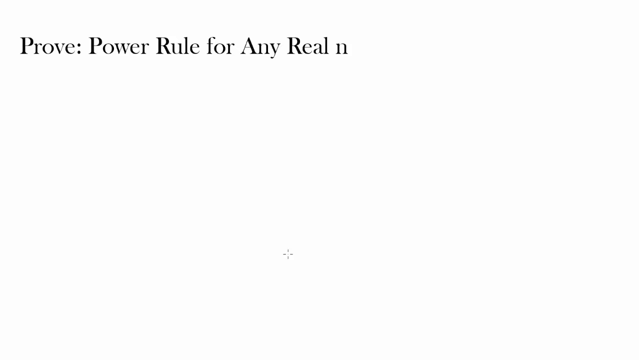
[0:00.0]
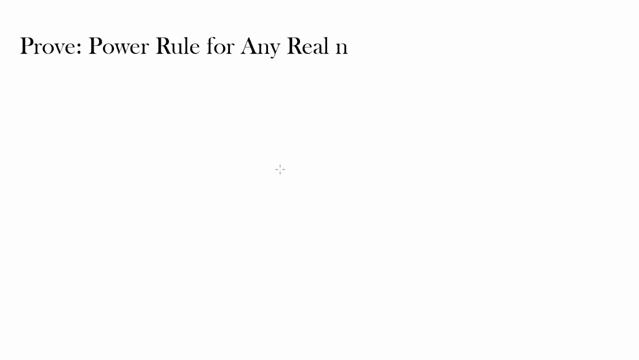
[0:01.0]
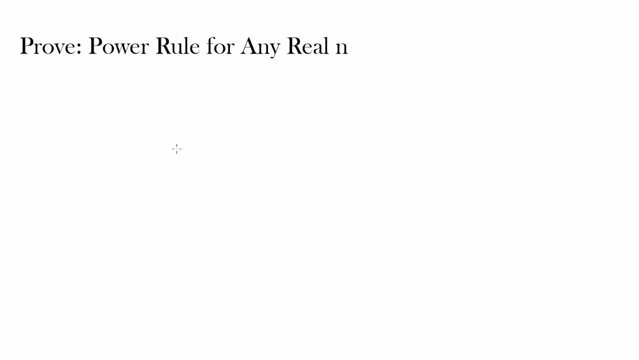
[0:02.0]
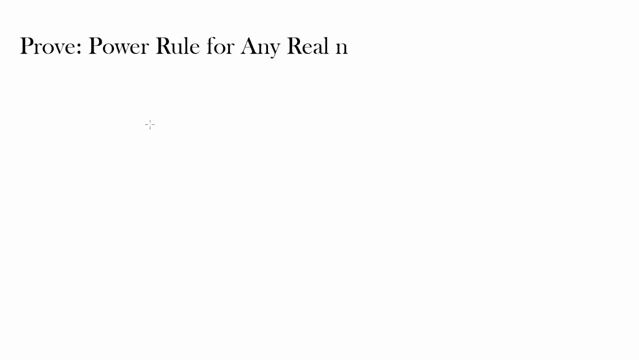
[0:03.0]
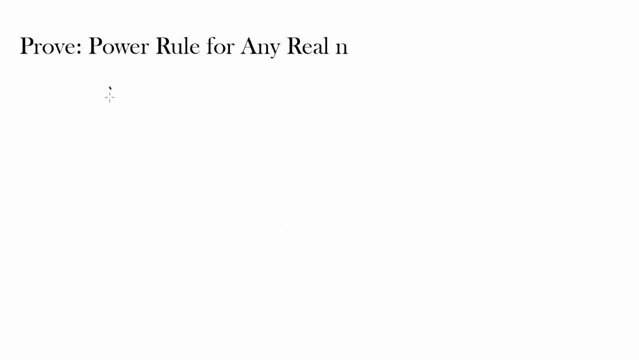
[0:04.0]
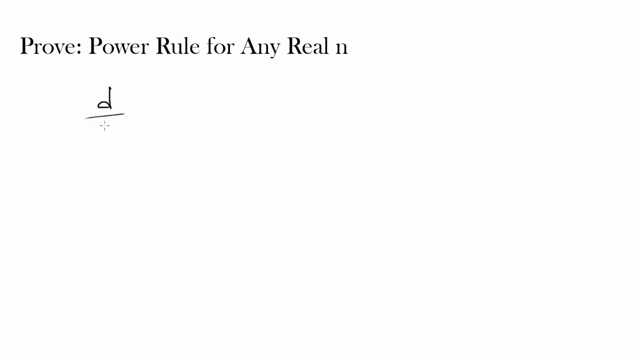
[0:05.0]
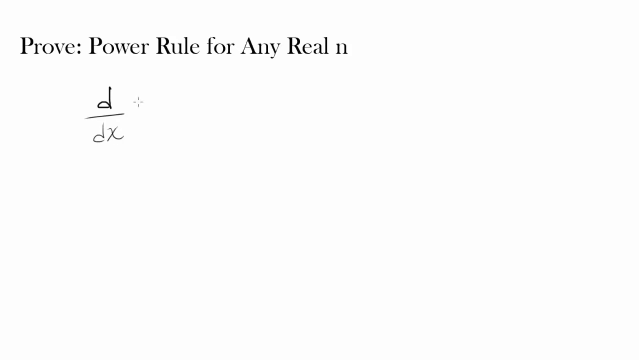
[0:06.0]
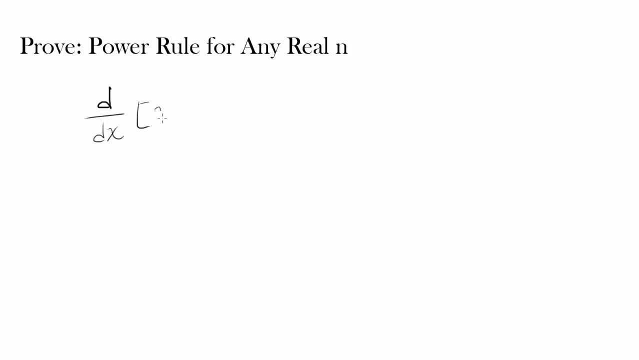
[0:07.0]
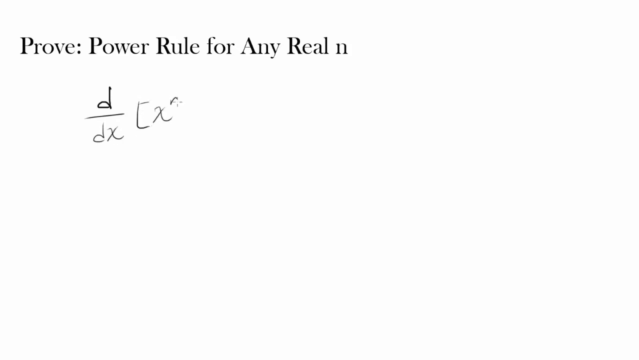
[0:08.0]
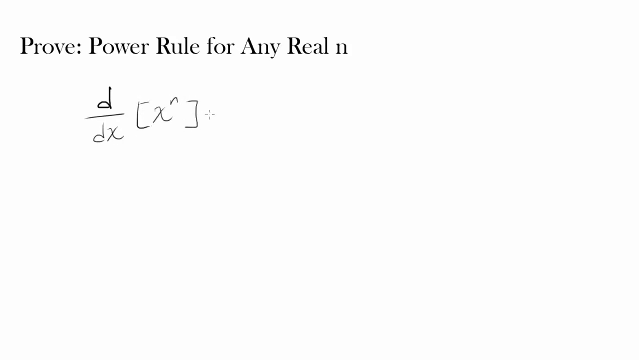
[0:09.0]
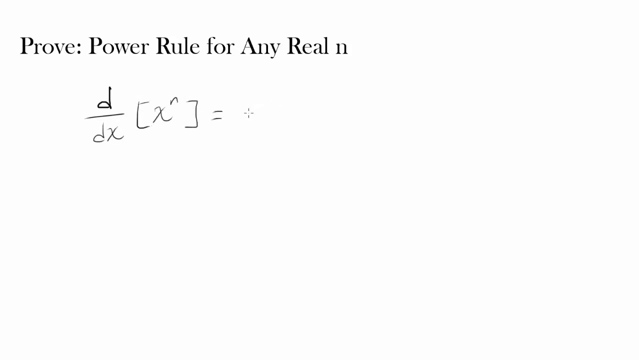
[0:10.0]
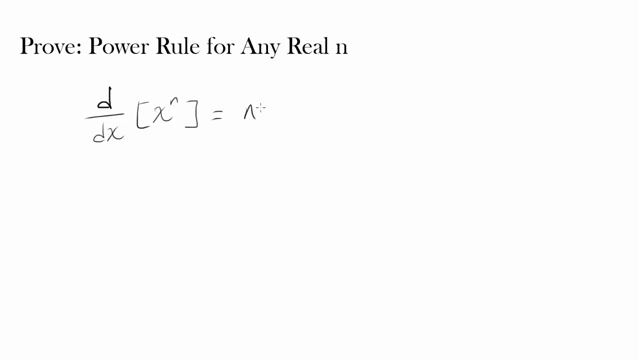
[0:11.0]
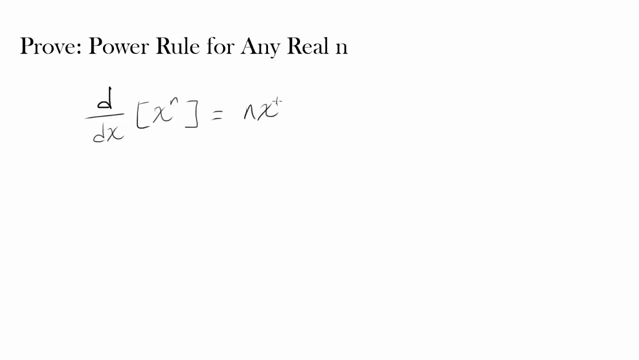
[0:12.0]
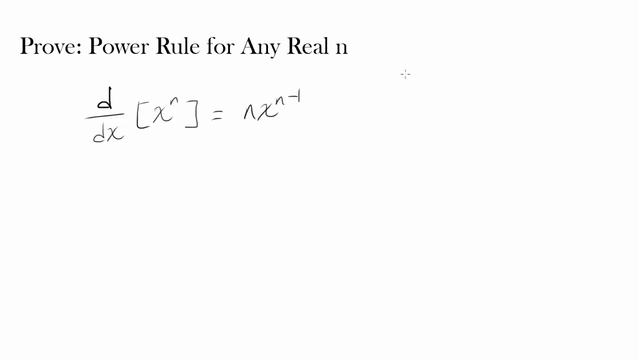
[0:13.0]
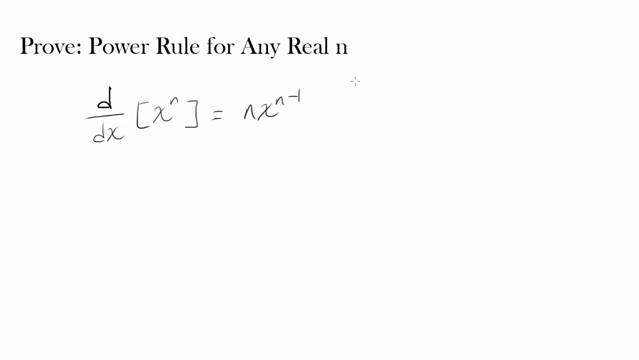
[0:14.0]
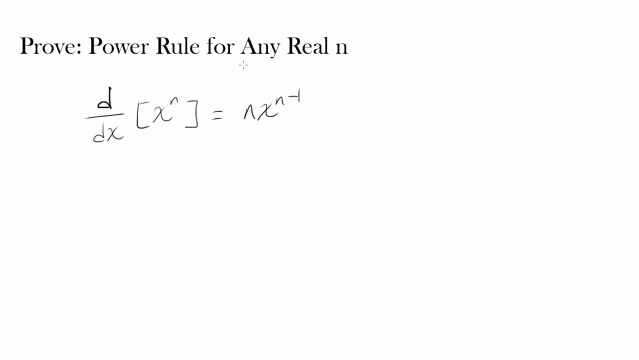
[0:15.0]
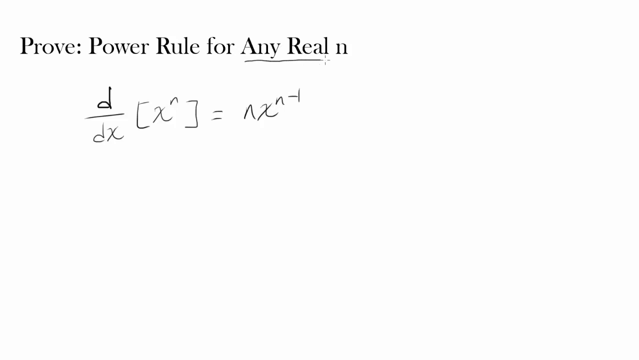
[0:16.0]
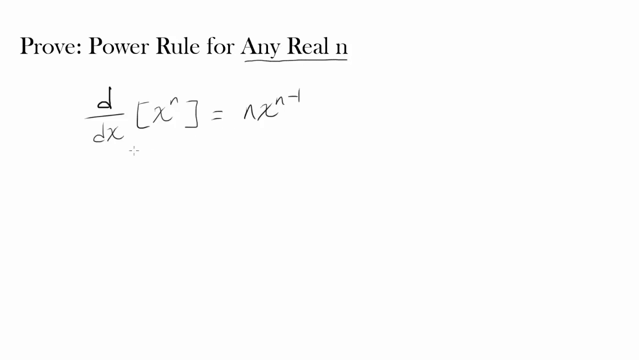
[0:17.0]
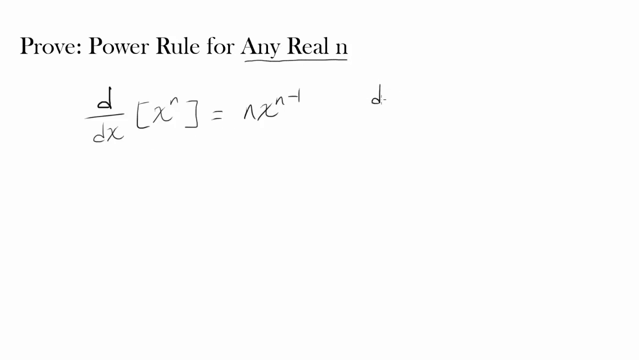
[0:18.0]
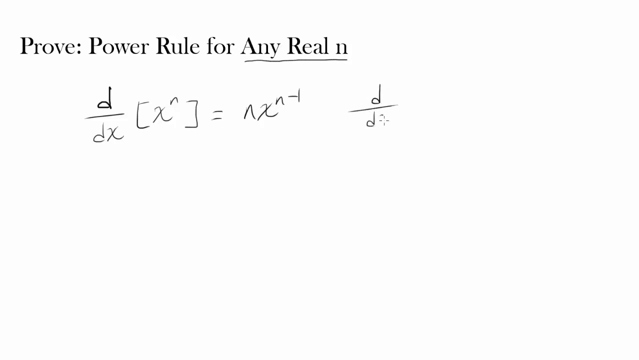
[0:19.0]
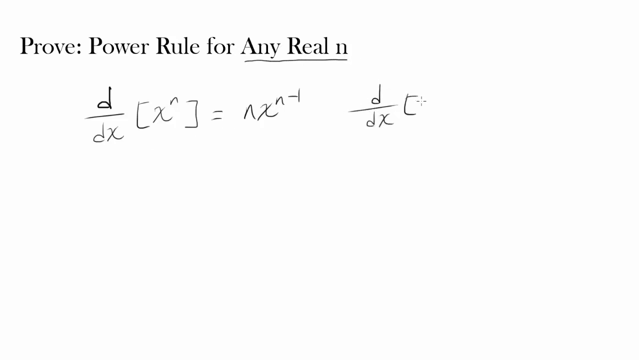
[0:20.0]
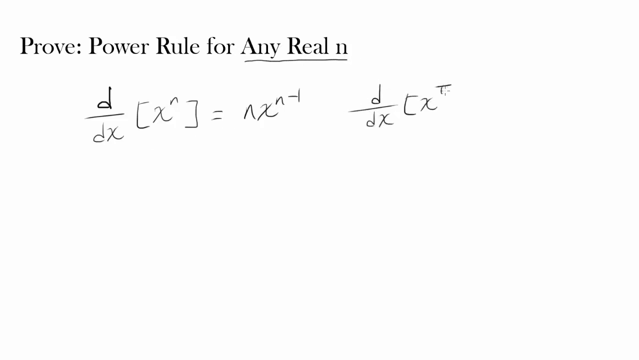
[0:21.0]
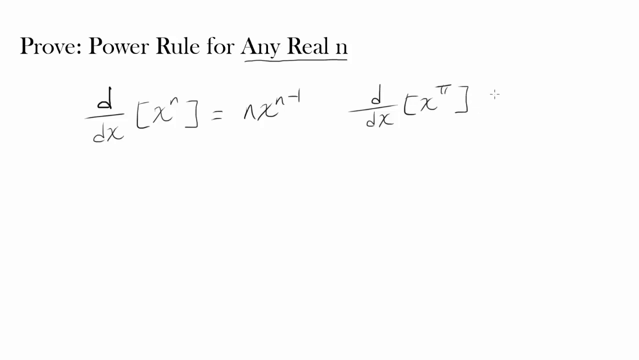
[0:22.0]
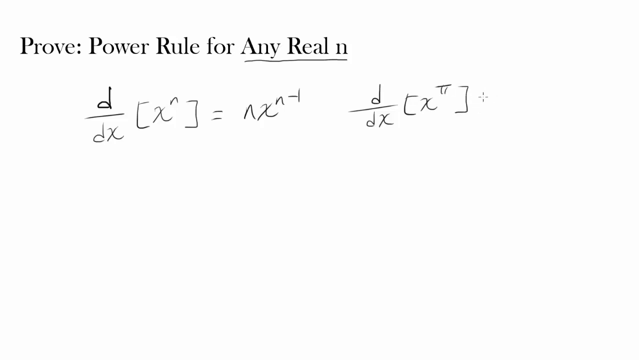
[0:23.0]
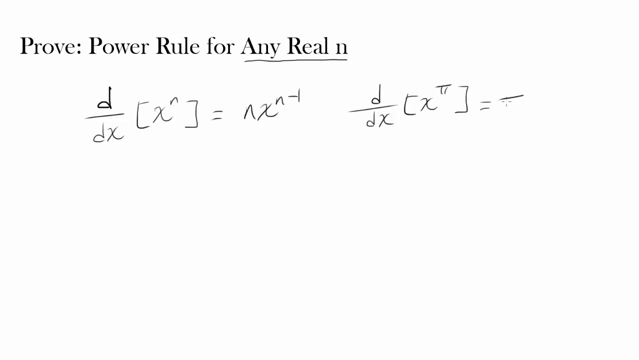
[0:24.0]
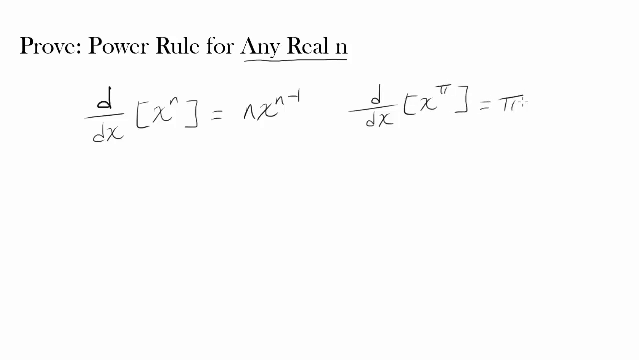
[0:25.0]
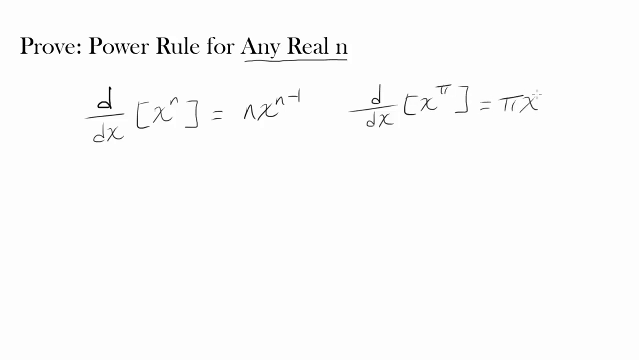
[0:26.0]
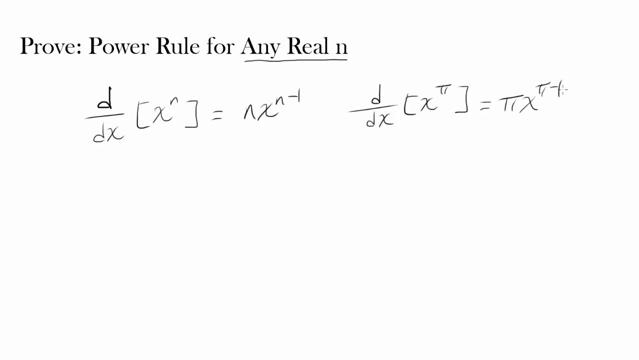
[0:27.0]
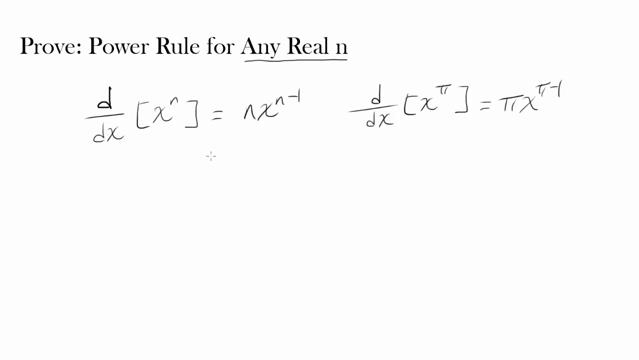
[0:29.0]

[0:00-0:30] A white screen, a whiteboard, shows the heading "Prove; Power Rule for Any Real n". A small cursor that looks like a heart begins writing in very fine print: a small d over a small dx, brackets, a small x with an arrow at the top right, another bracket, two lines over each other for equals, then a small n and a small x, and to the right of that a small n and a small t. At this point the words "any real" are underlined. The next equation begins with a small d over a small dx, brackets, x, and a Roman numeral two to the right. The two separate equations are written from the left of the screen to the right.